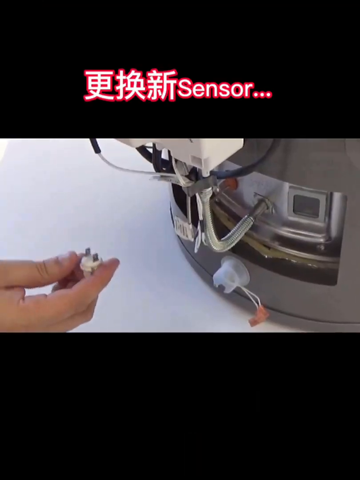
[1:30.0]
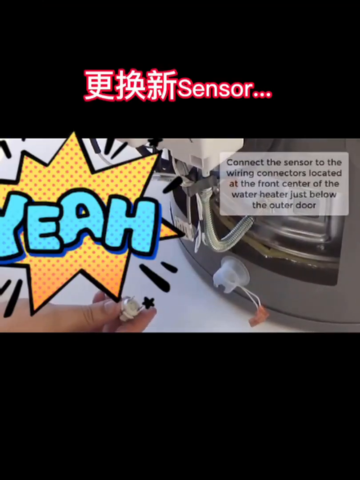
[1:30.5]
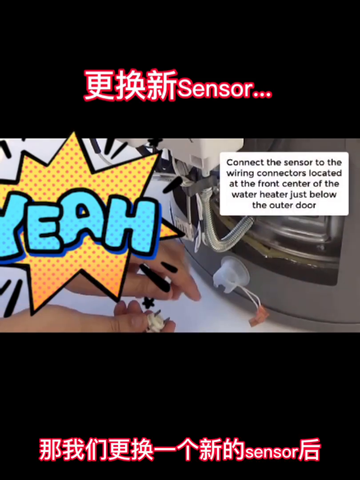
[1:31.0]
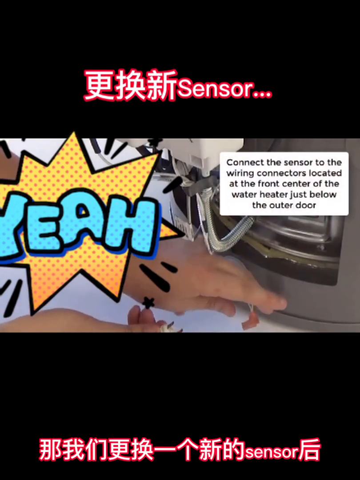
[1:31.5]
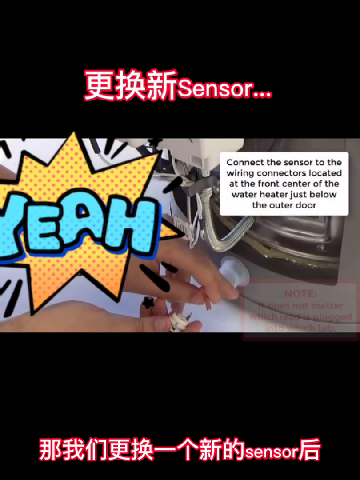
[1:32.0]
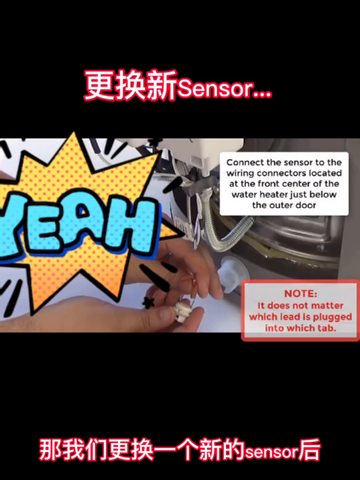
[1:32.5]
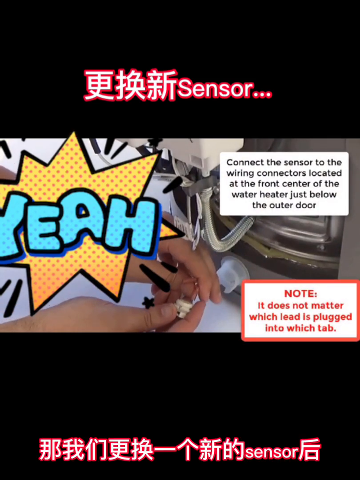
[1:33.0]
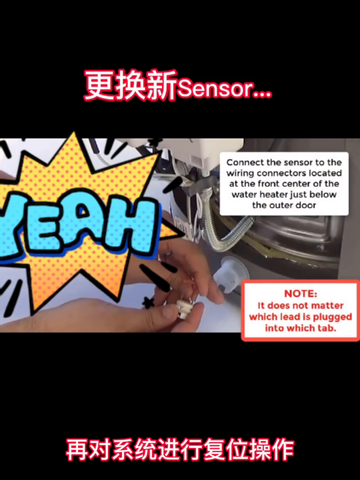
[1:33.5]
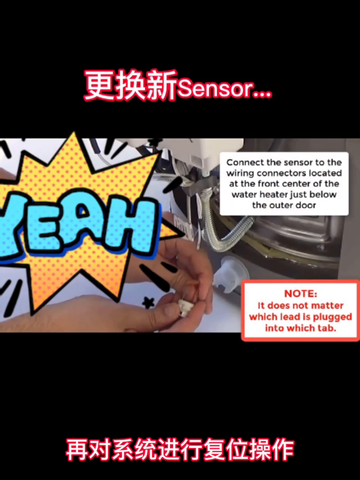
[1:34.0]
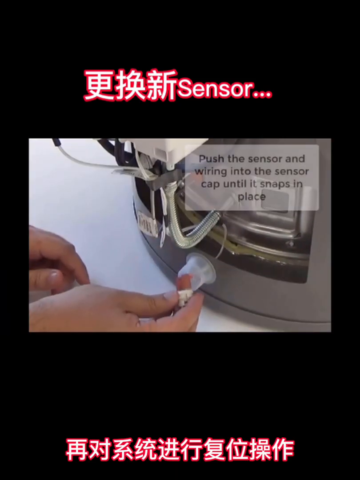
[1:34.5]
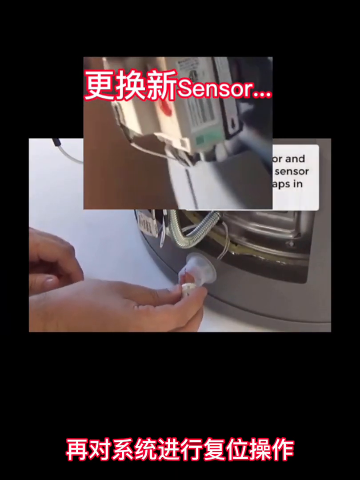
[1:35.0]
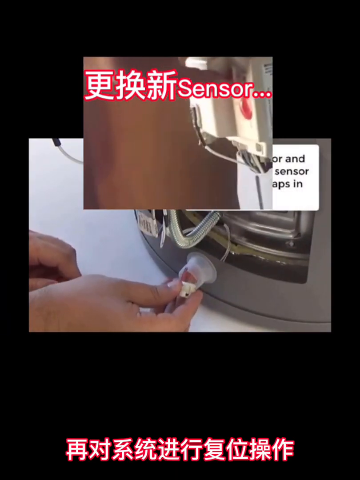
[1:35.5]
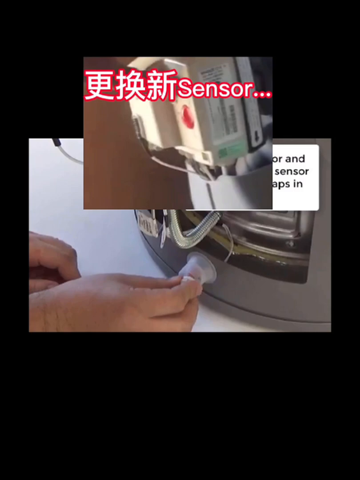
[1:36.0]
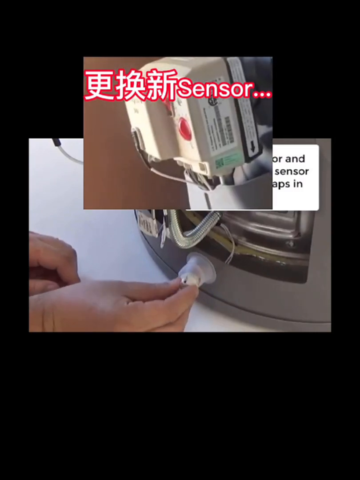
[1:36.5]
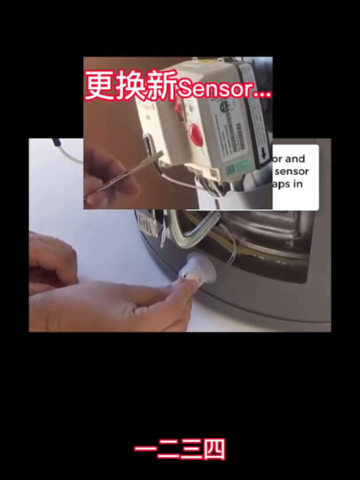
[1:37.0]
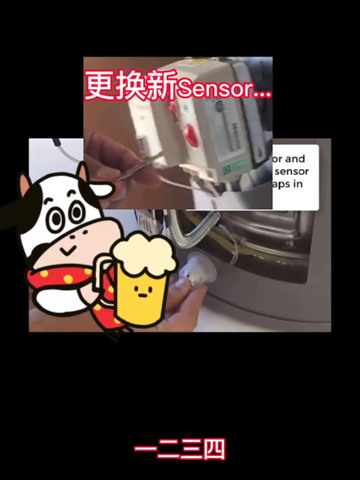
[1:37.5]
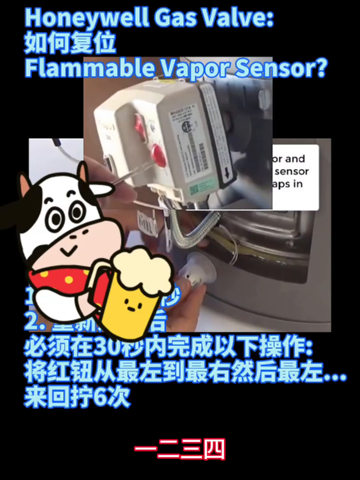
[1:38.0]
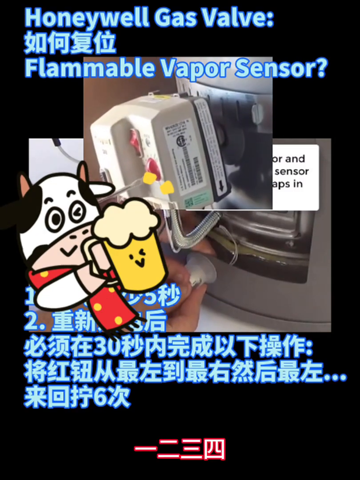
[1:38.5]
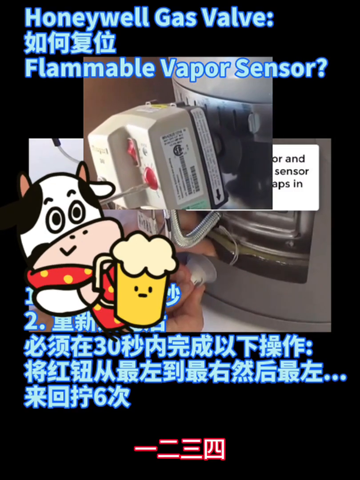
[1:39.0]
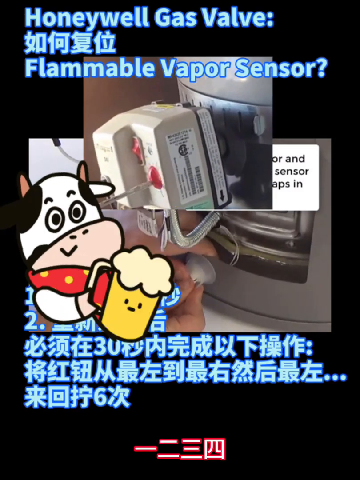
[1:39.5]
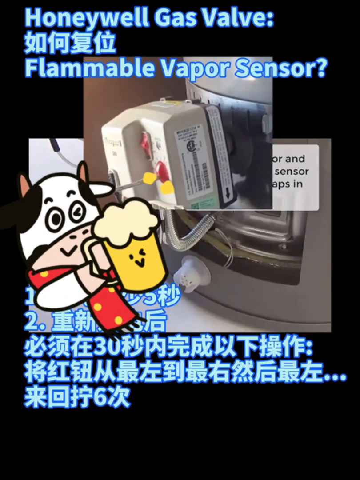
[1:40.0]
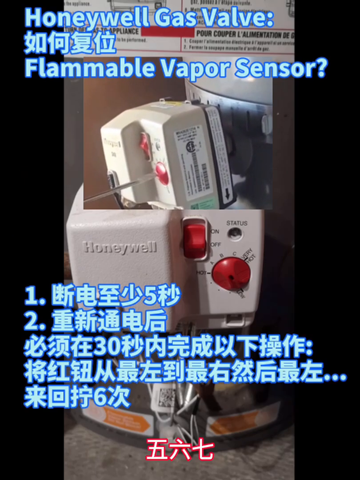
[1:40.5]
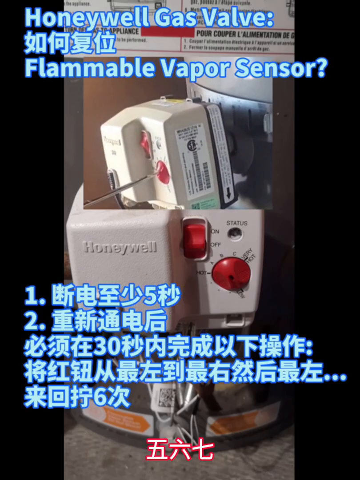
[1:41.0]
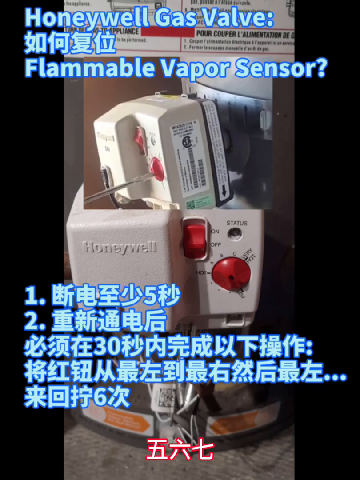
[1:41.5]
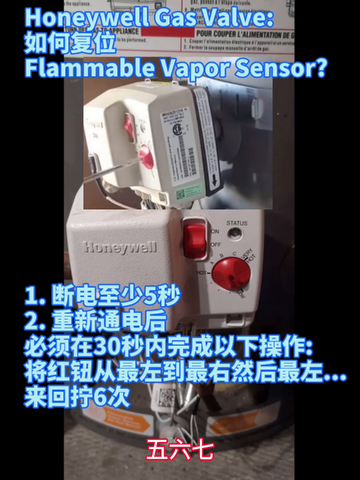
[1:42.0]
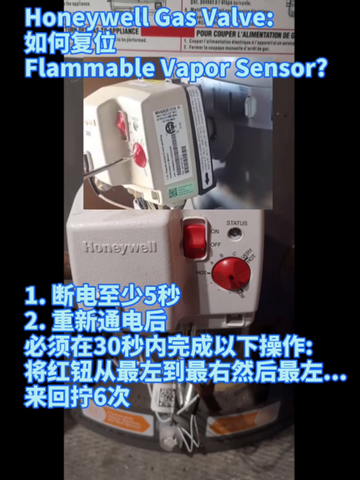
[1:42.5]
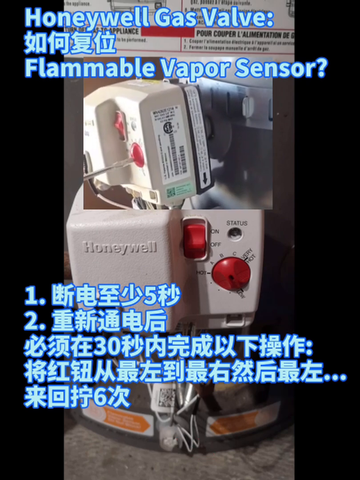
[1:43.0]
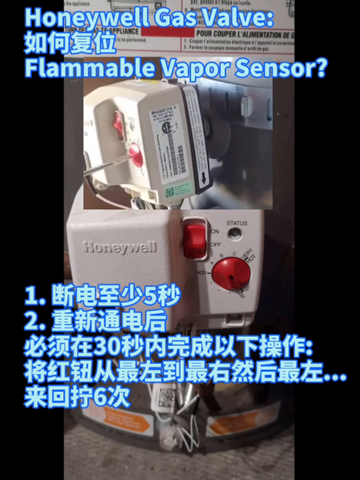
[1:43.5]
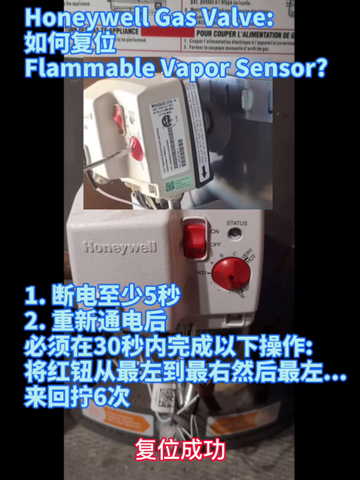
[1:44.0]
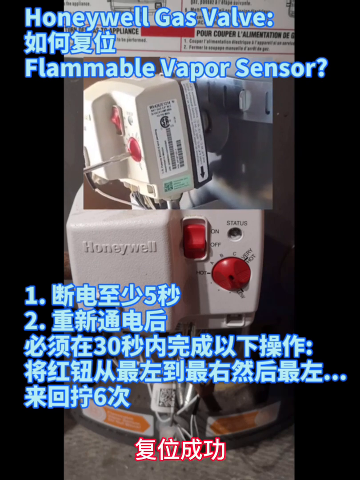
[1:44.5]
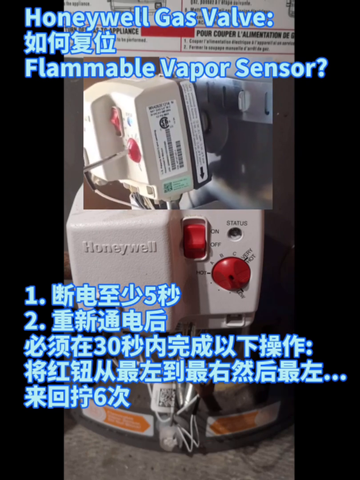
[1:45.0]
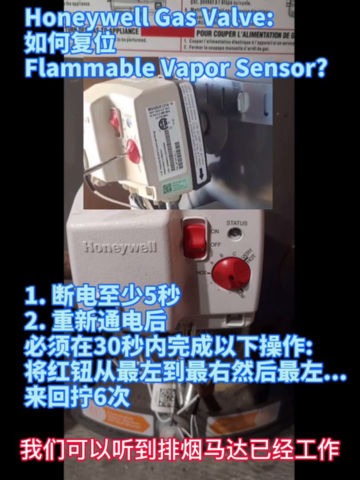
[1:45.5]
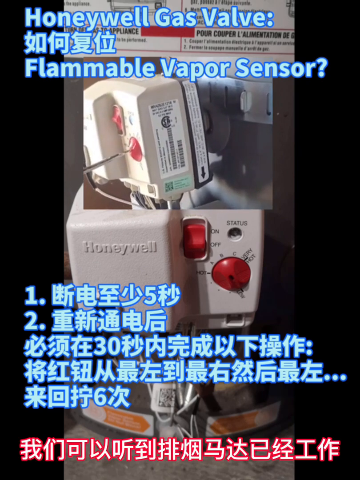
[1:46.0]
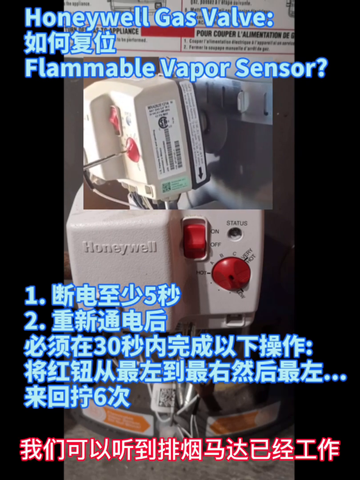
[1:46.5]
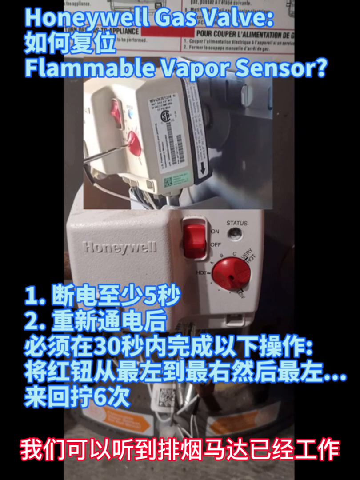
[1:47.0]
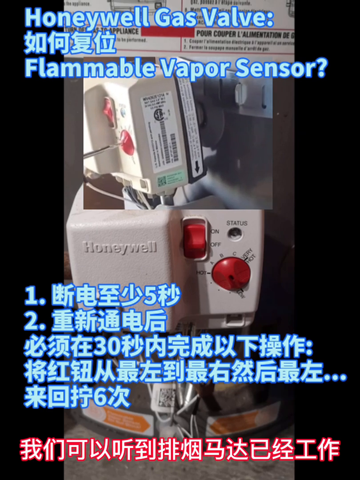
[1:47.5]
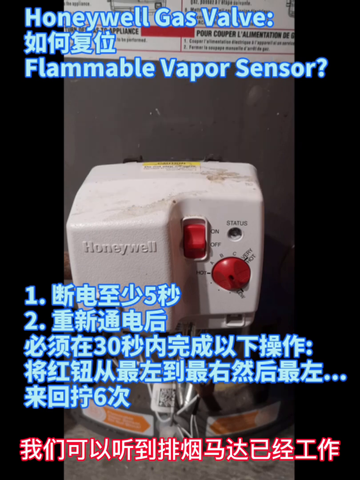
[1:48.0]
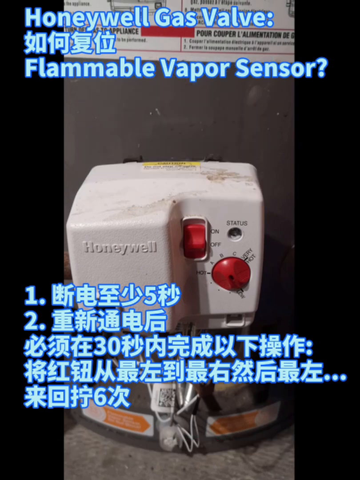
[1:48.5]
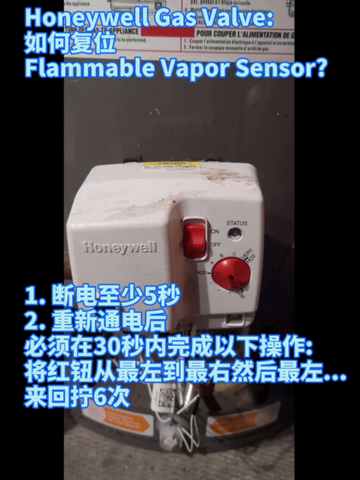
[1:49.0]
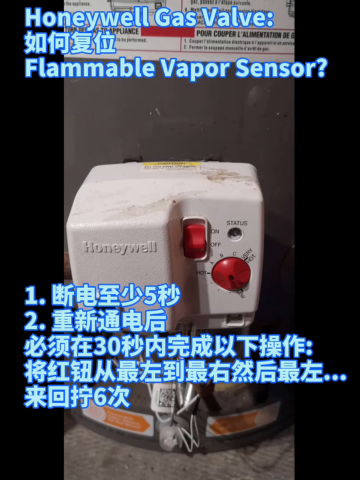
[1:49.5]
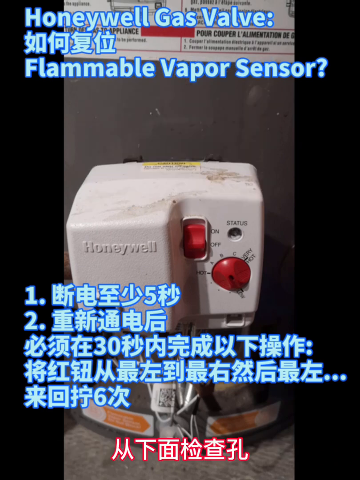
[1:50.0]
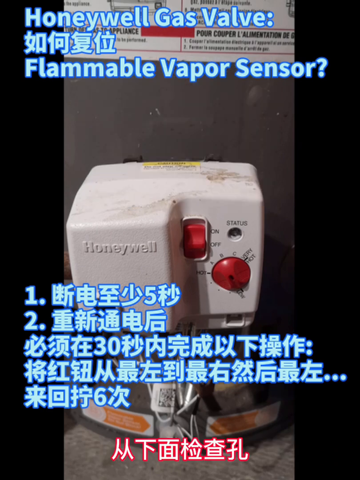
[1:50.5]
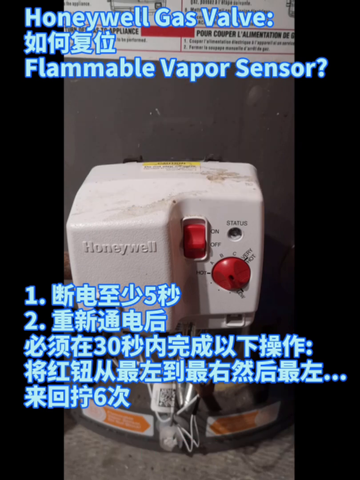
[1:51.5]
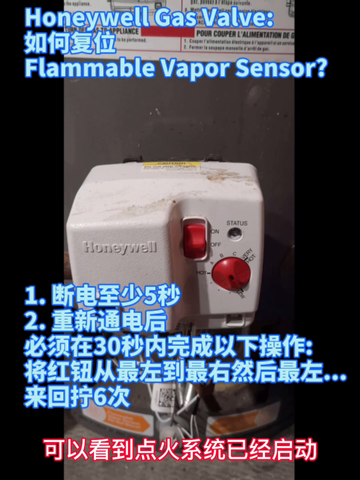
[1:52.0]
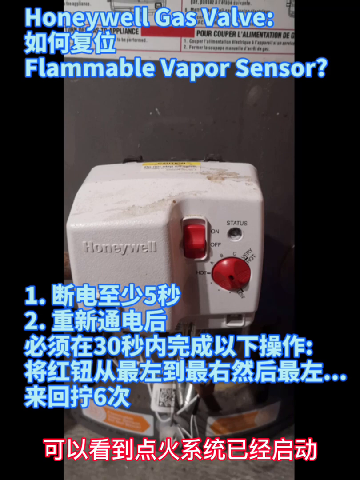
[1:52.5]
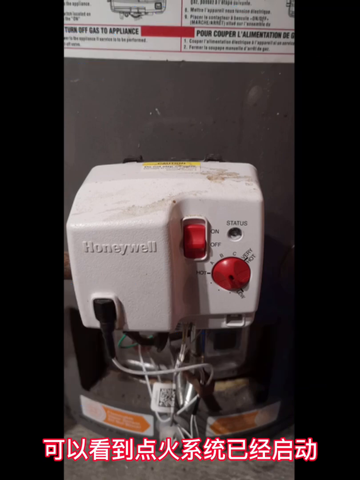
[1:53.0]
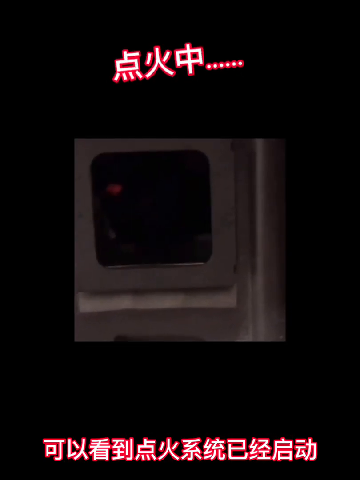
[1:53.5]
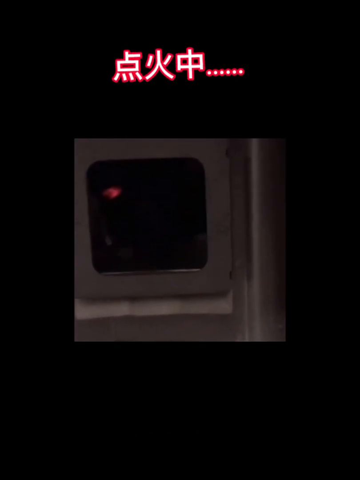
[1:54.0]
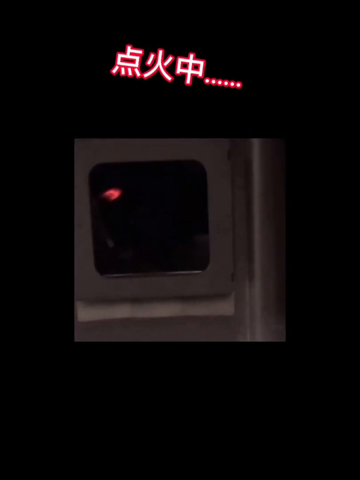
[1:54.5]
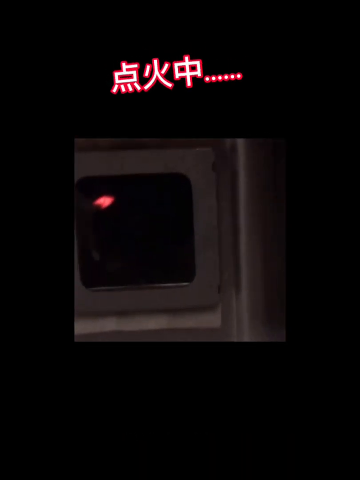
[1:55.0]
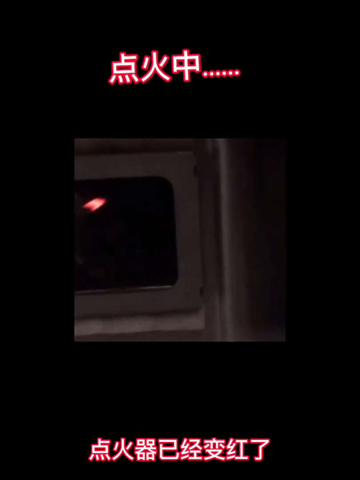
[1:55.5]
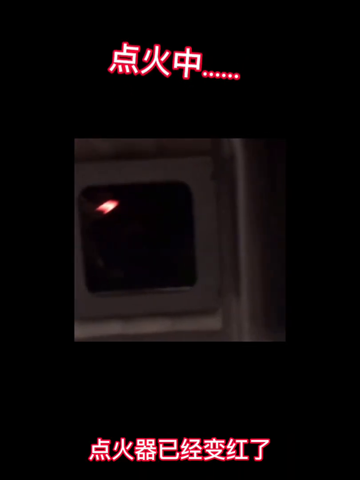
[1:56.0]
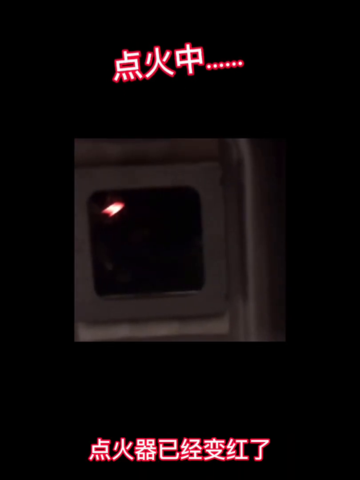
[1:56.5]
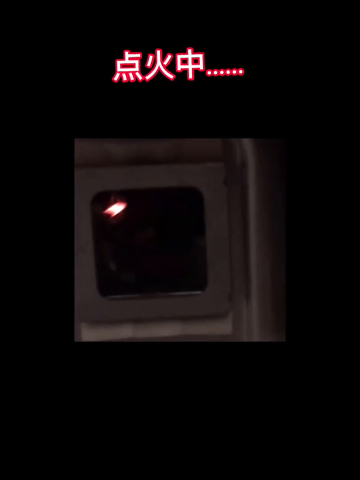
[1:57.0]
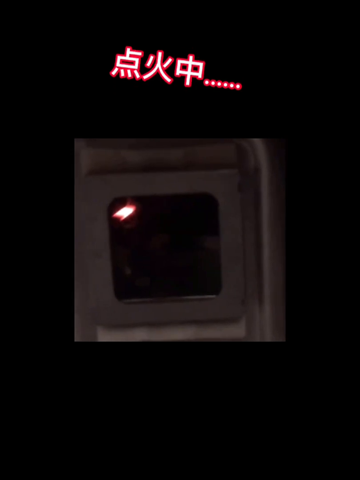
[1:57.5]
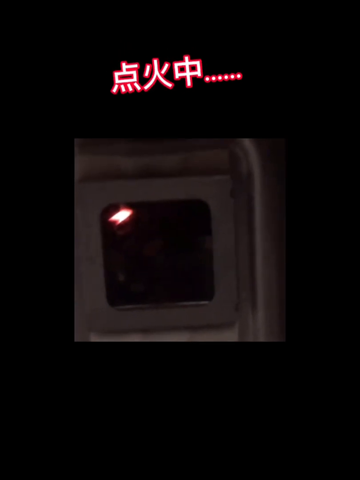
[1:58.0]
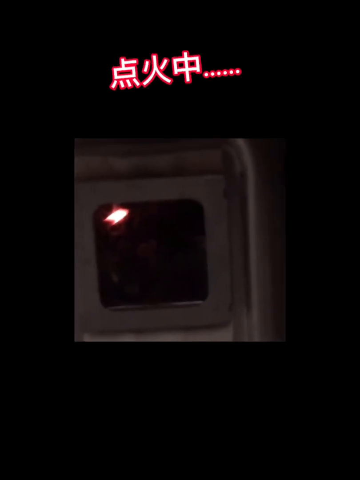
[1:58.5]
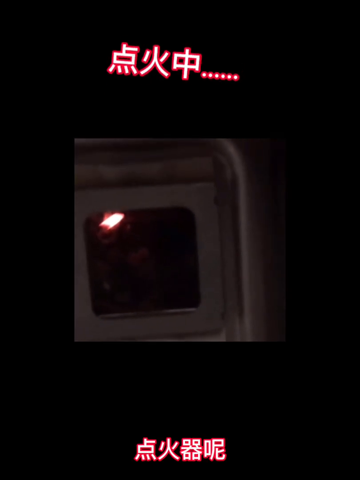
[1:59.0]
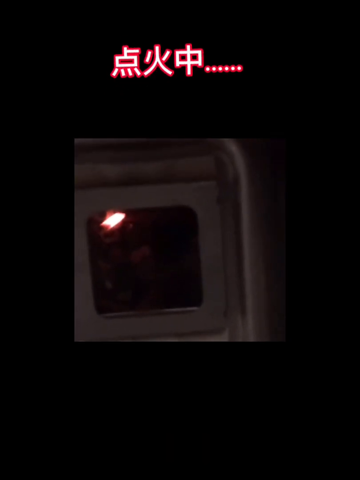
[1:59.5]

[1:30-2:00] Further instructions, possibly additional steps for the reset, read: "Connect the sensor to the wiring connectors located at the front center of the water heater, just below the outer door. It does not matter which lead is plugged into which tab." The sensor gets plugged into that part. The knob is still turned six times, apparently as another step of the reset for the water heater or the vapor sensor.